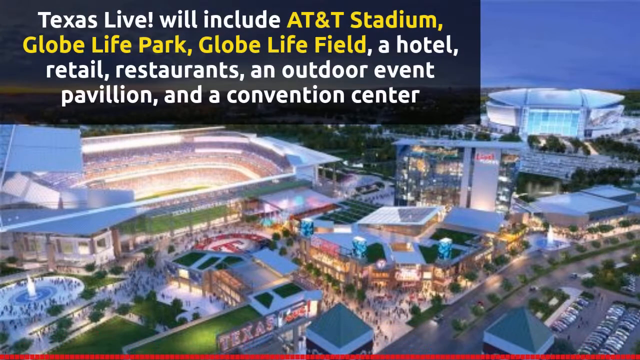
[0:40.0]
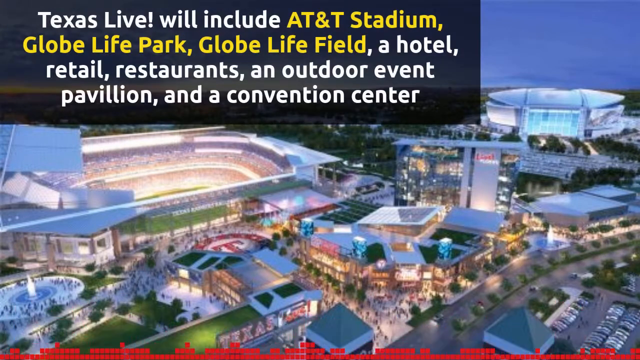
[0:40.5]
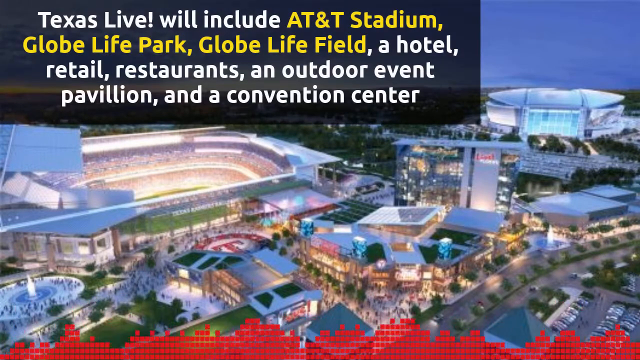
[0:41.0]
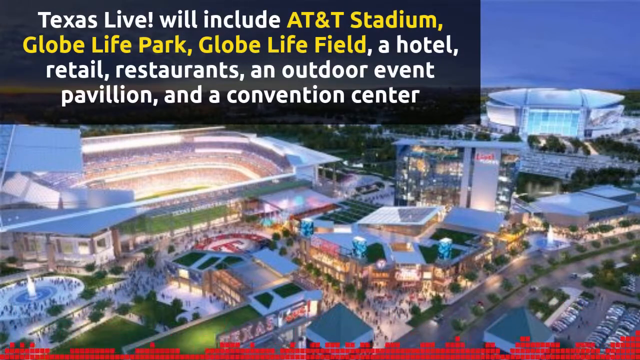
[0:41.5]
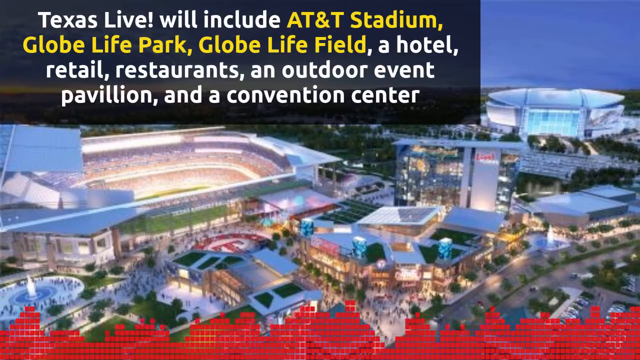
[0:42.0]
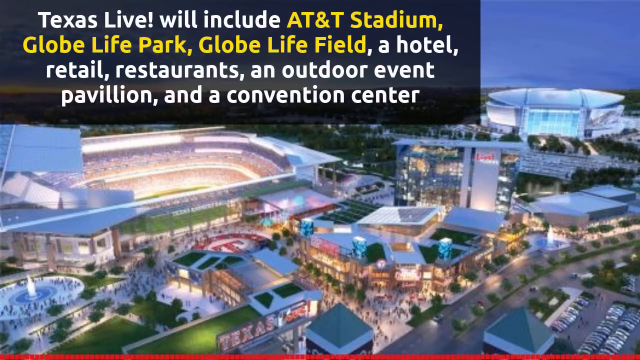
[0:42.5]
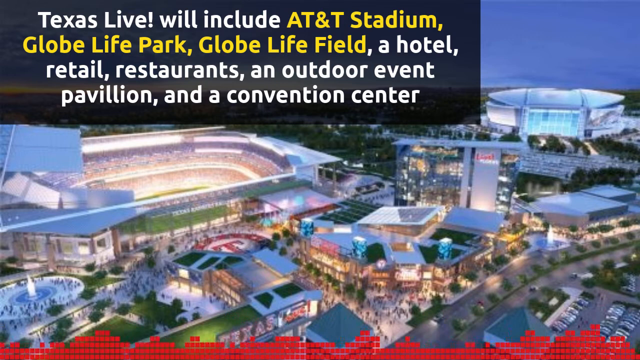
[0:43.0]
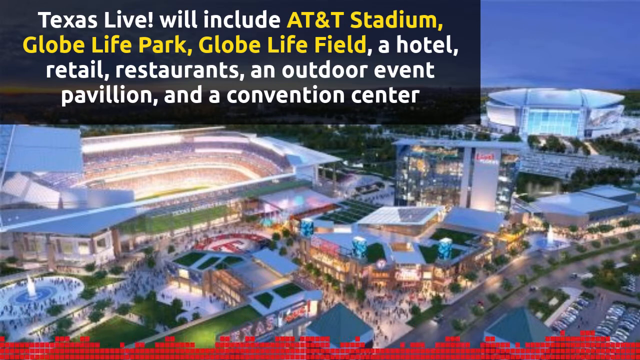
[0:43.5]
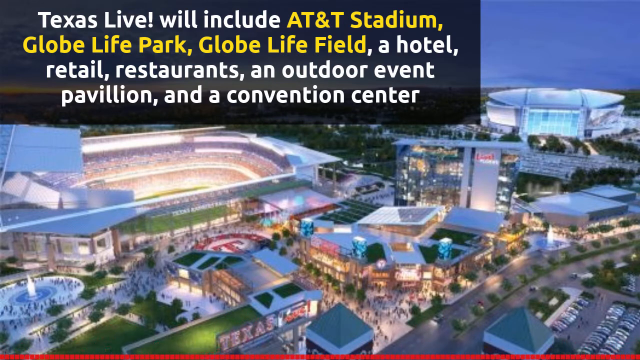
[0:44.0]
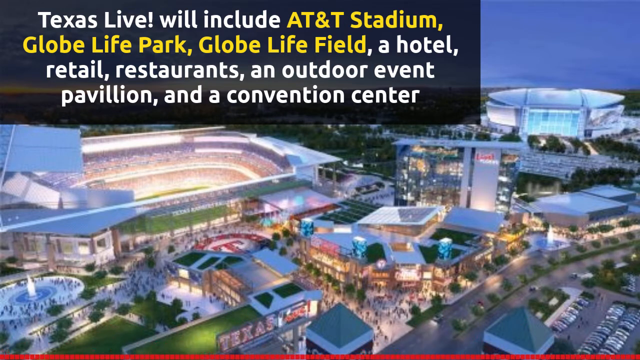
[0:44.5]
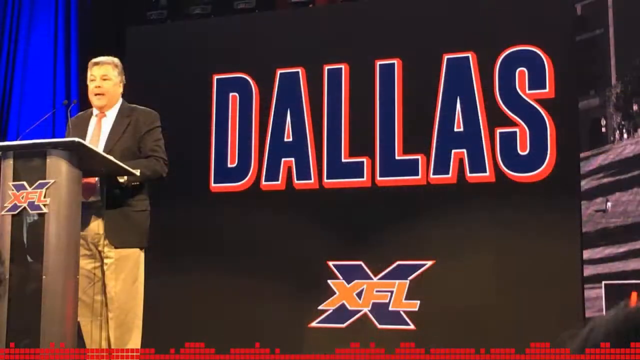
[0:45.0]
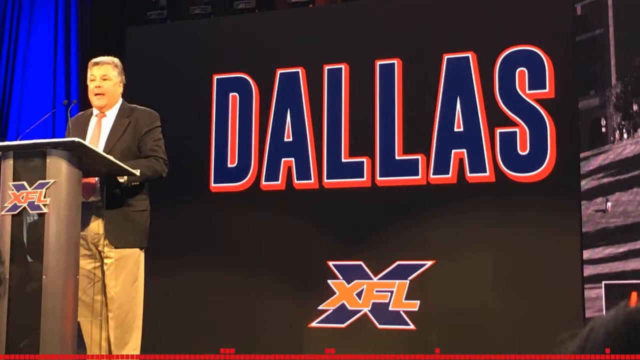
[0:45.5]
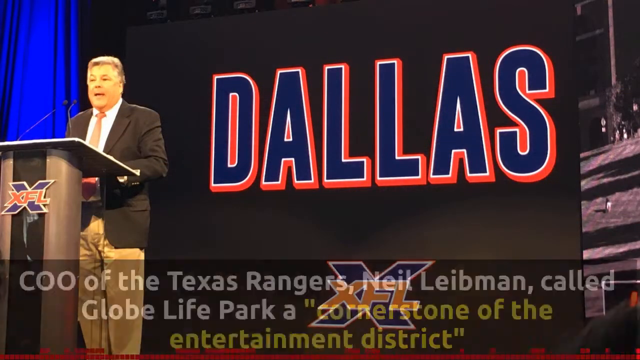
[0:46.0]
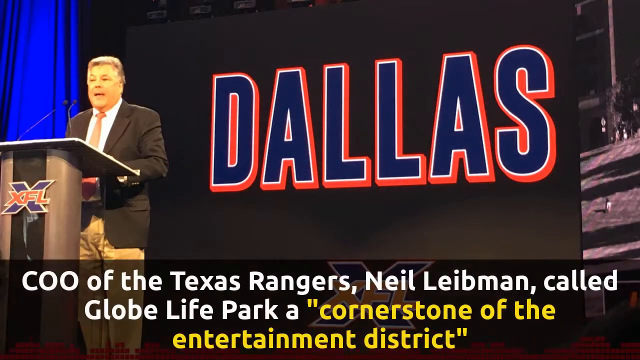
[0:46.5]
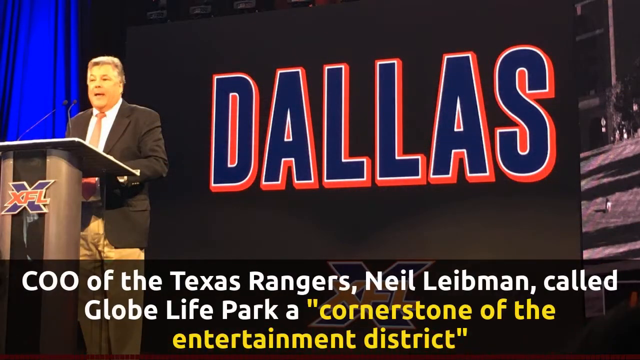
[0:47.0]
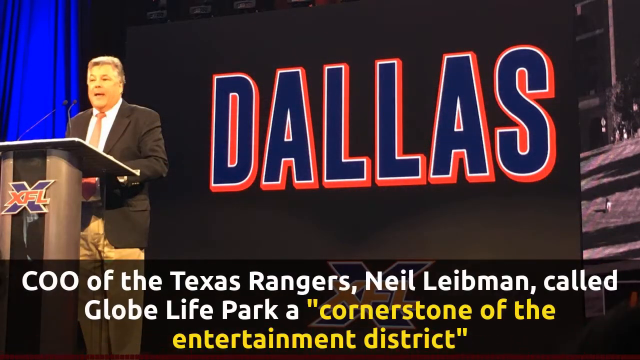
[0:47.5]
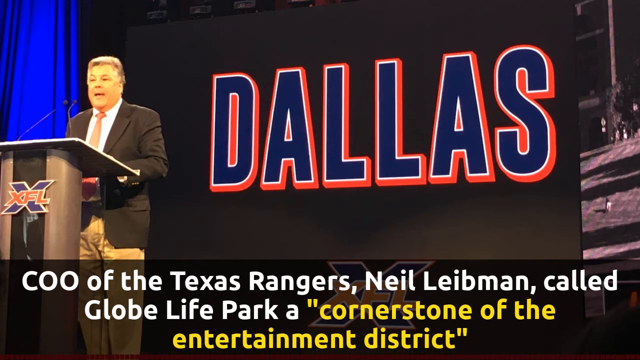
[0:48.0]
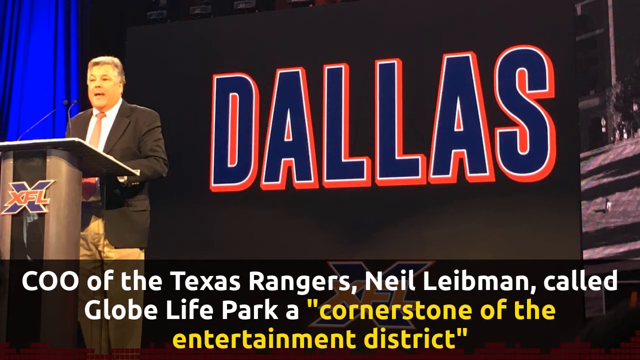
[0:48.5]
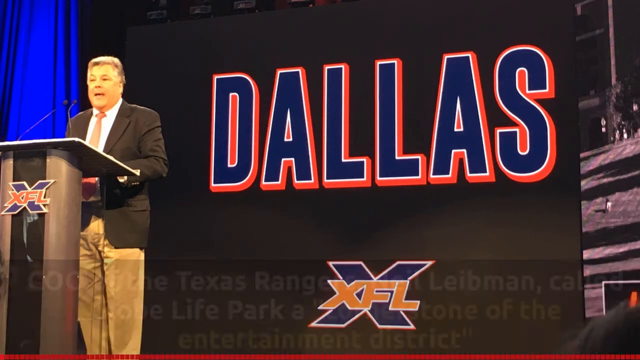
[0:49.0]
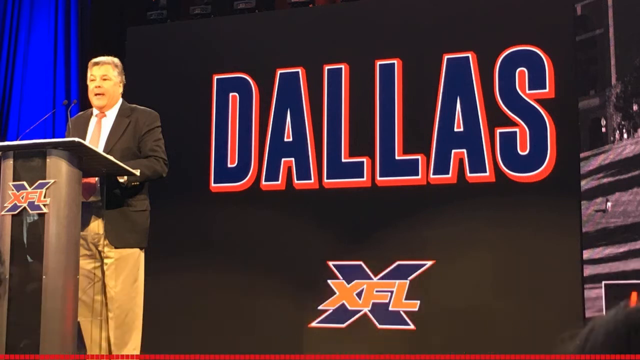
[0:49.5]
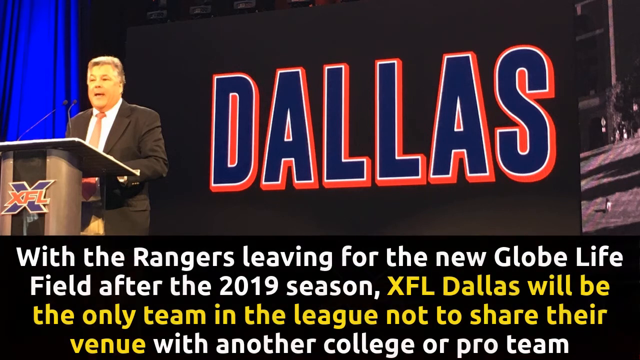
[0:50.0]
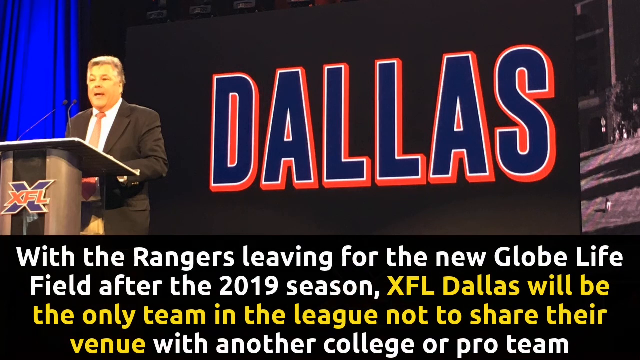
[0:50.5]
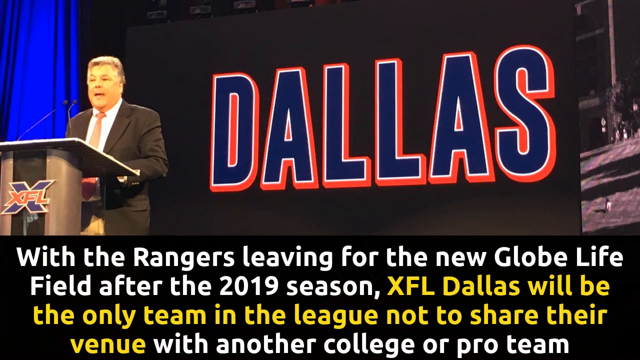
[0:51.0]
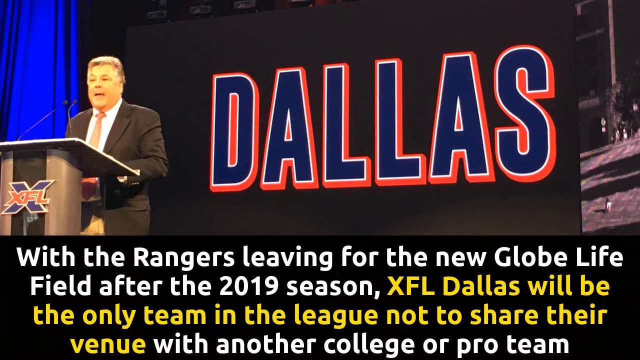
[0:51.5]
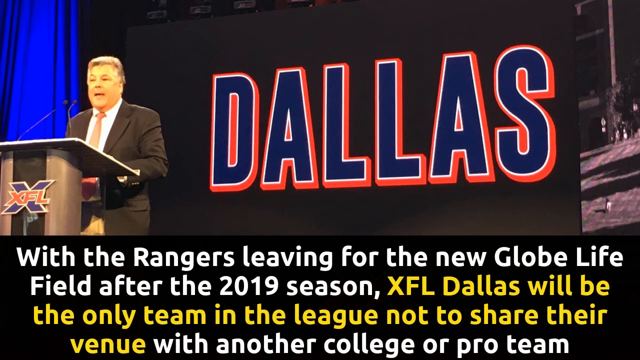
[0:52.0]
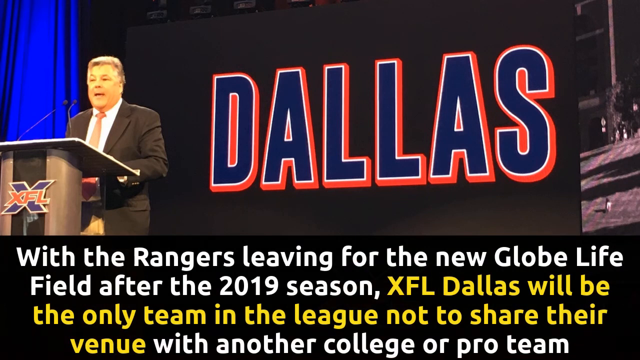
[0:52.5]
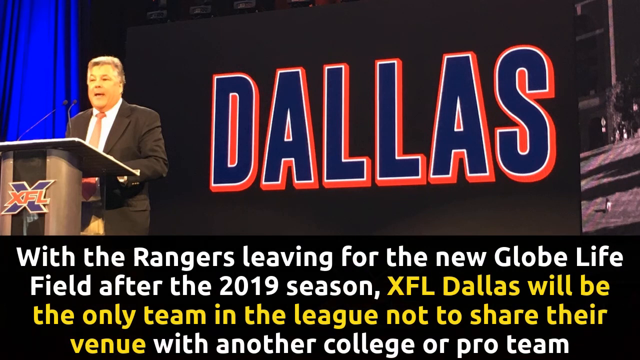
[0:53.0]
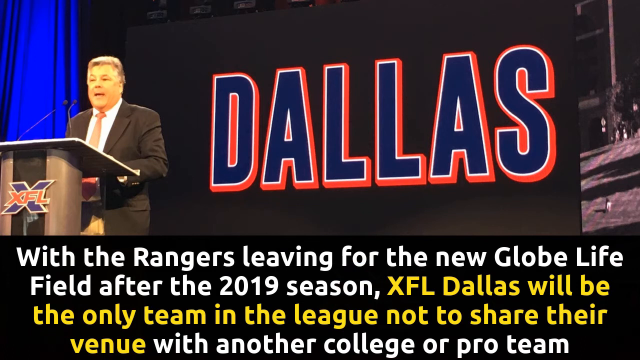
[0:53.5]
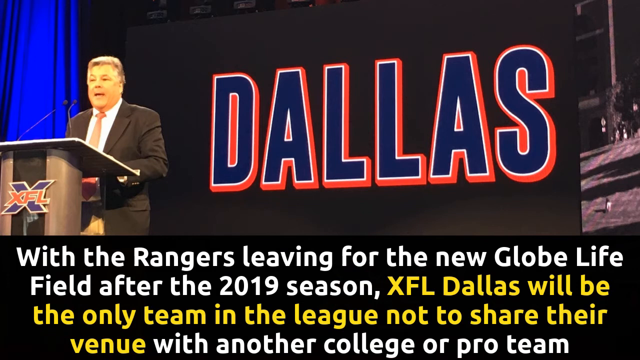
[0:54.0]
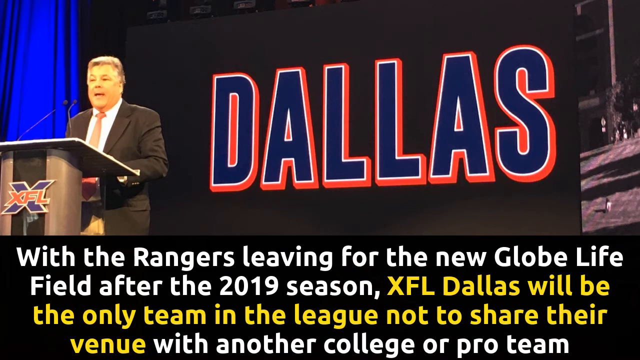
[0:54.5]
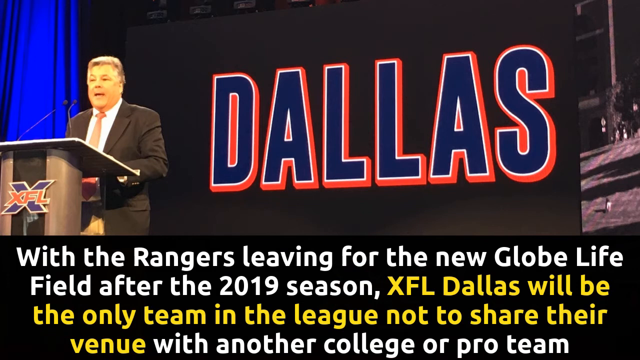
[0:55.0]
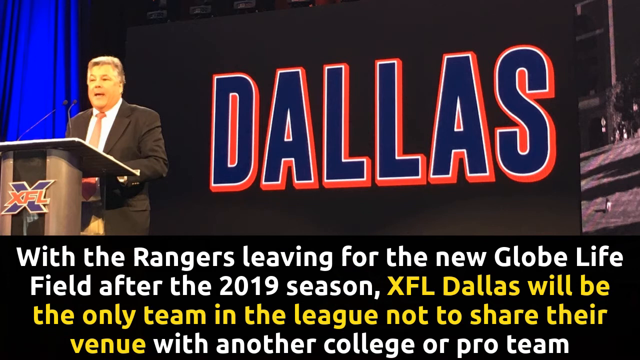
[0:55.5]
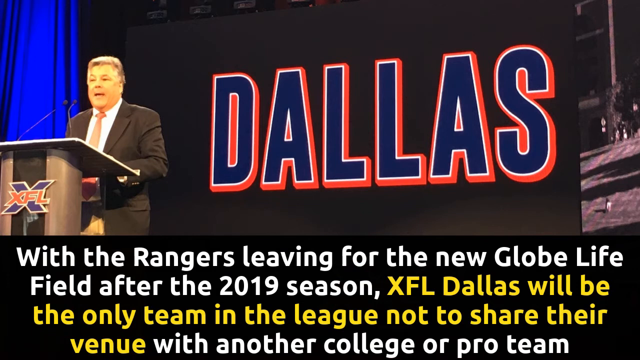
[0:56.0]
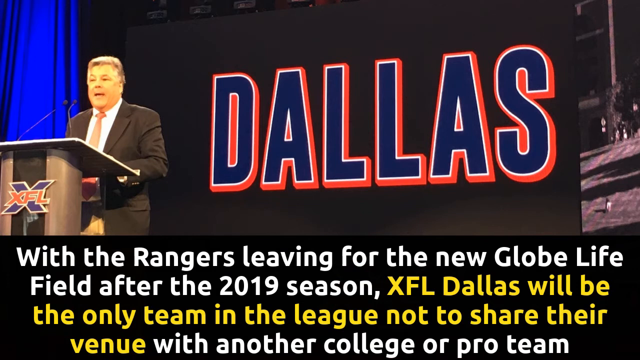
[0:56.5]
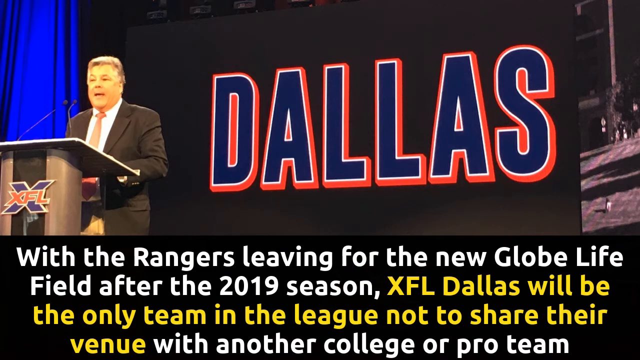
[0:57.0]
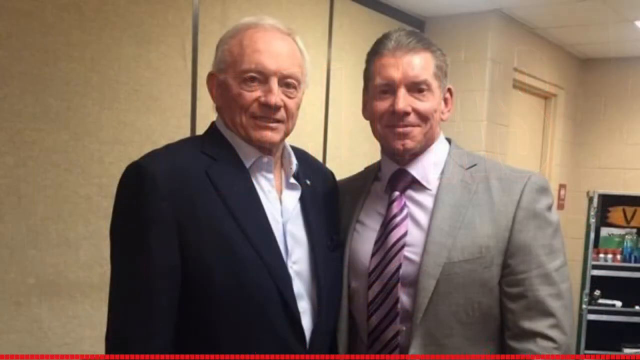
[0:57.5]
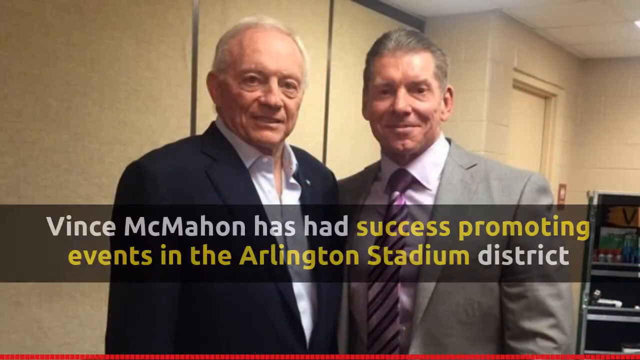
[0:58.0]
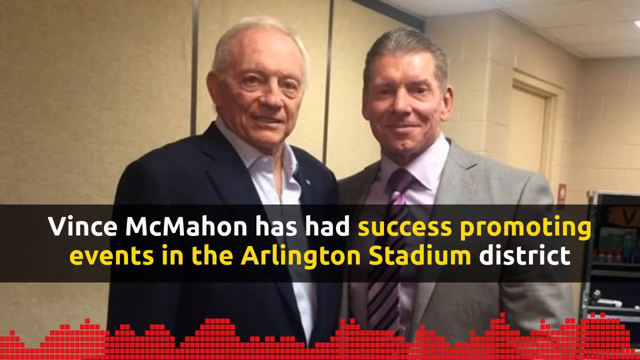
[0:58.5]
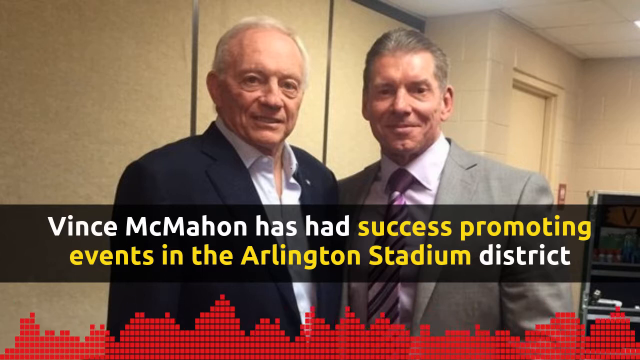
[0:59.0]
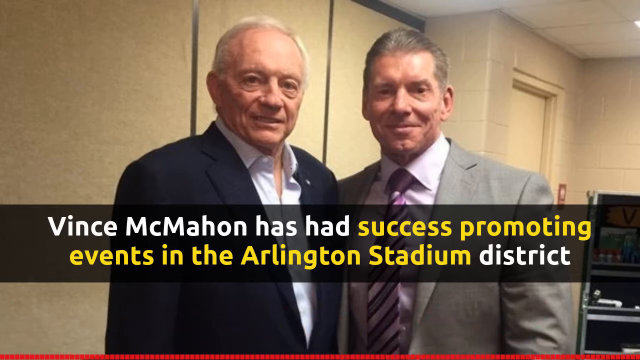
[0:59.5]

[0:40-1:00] The image of the leisure park remains on screen. A photo follows of a middle-aged man standing at a lectern bearing the XFL logo, with the Dallas name behind him. He is Neil Leibman, Chief Operating Officer of the Texas Rangers, and he wears a dark sports jacket, chinos, a white shirt and an orange tie. Next, Vince McMahon, who looks as though he works out a lot, and Jerry Jones, owner of the Dallas Cowboys, stand together; McMahon is in a suit and tie, and Jones wears a blazer and an open-neck white shirt.